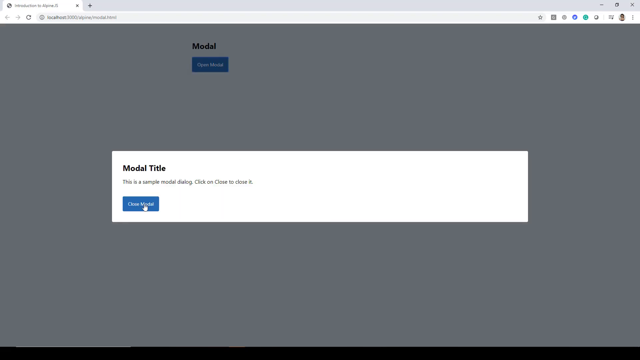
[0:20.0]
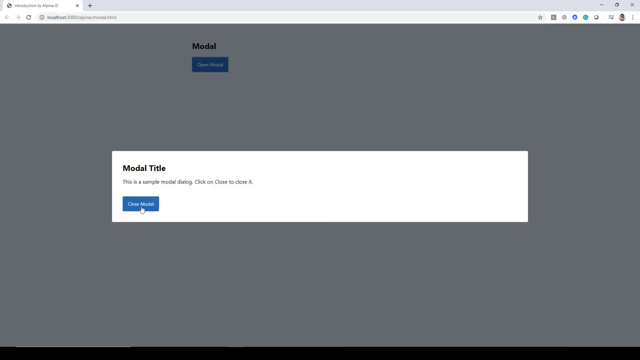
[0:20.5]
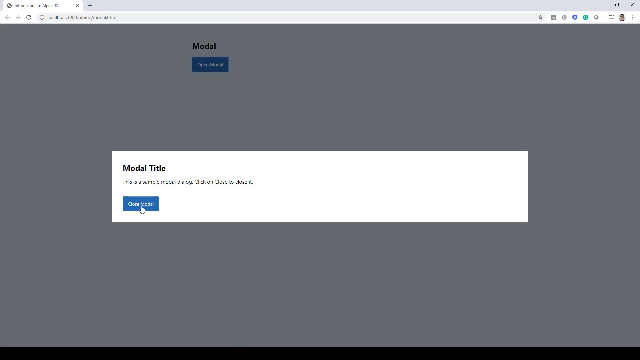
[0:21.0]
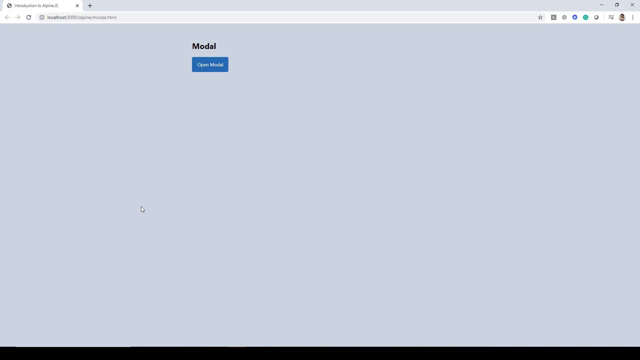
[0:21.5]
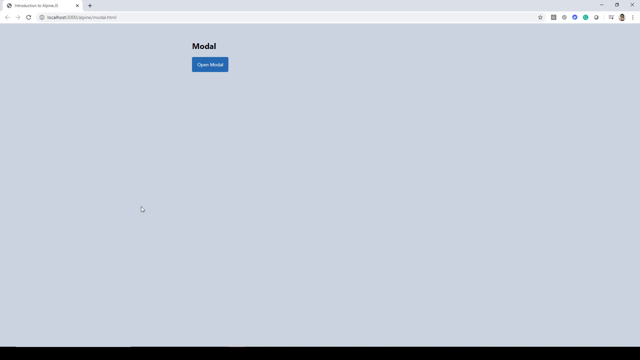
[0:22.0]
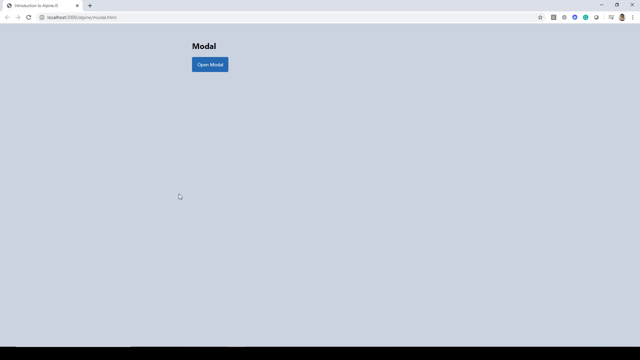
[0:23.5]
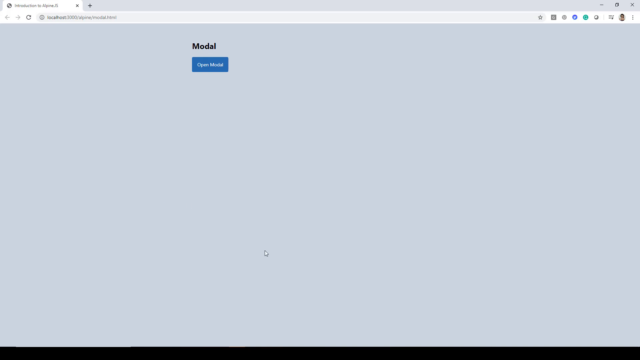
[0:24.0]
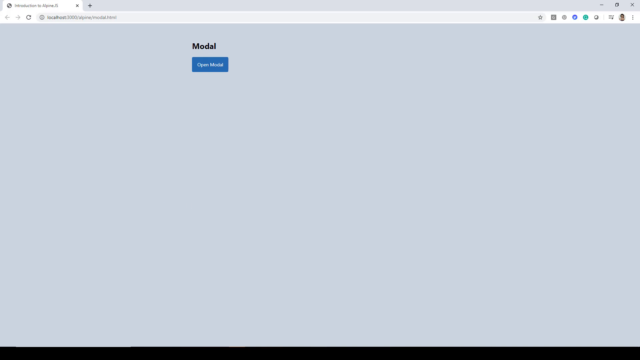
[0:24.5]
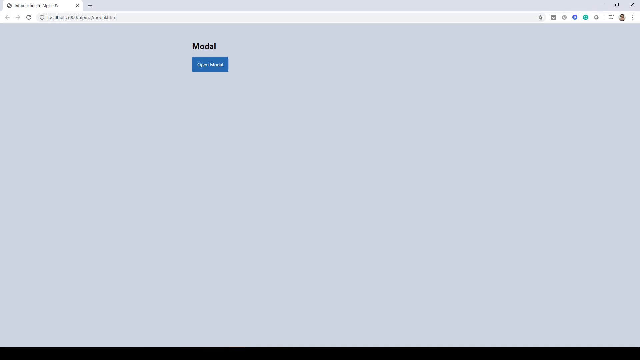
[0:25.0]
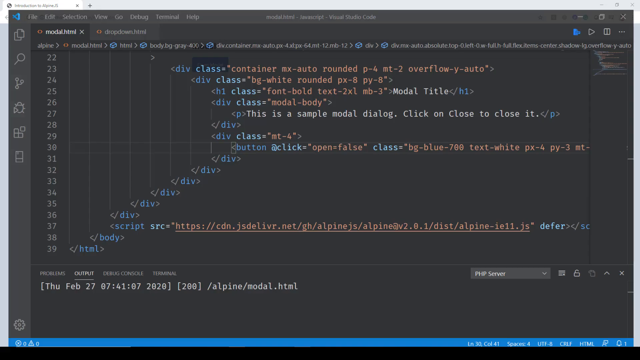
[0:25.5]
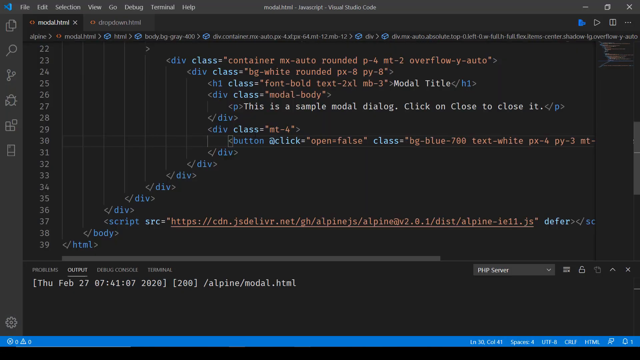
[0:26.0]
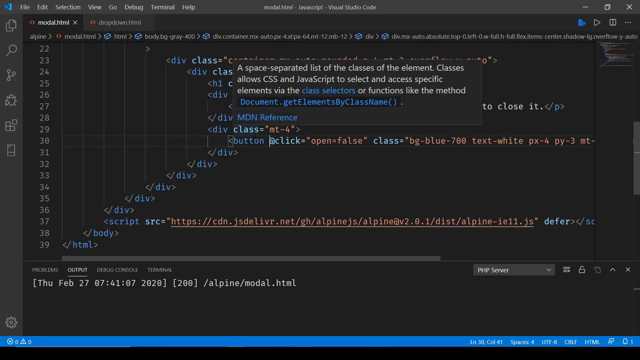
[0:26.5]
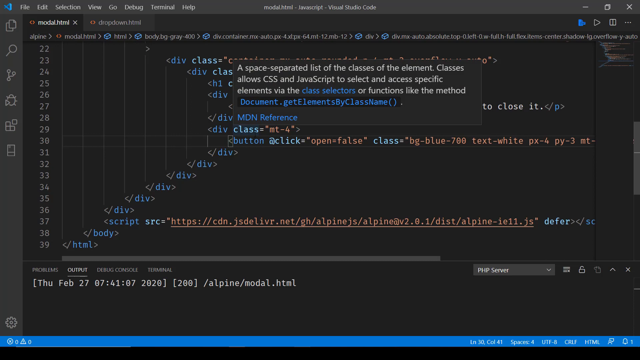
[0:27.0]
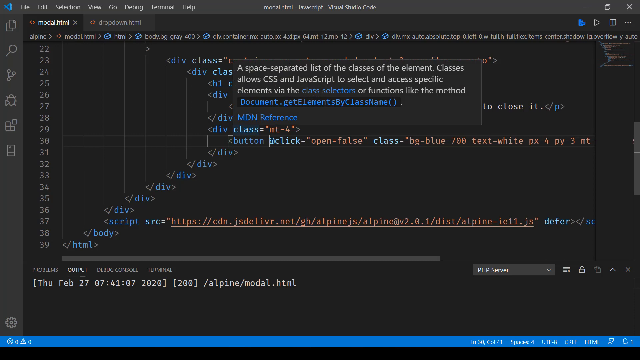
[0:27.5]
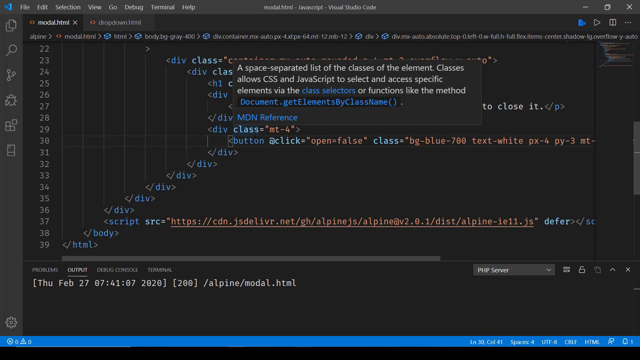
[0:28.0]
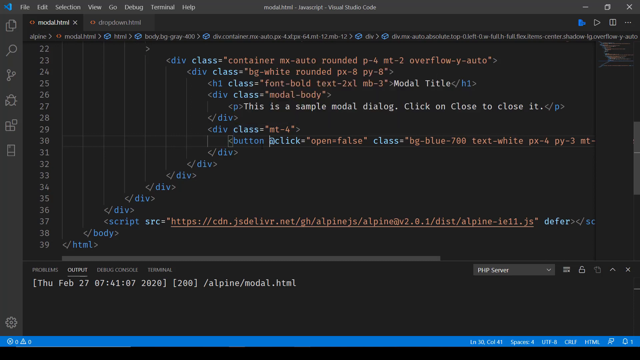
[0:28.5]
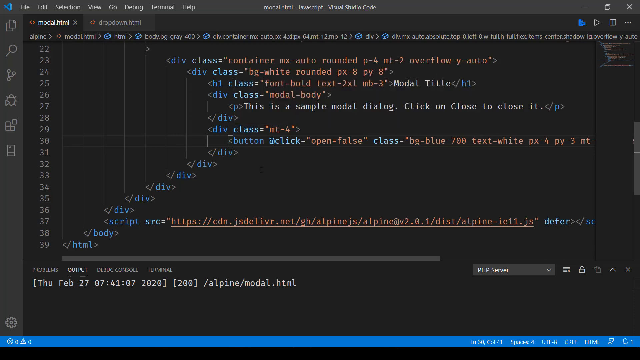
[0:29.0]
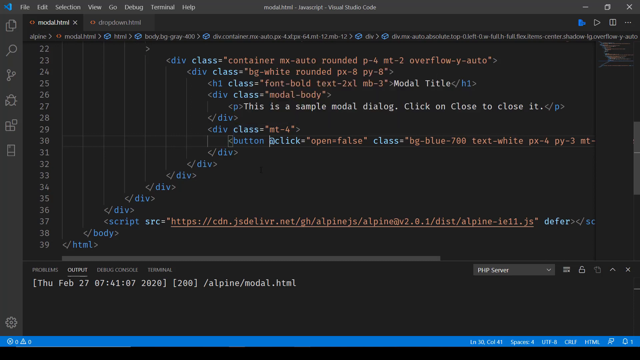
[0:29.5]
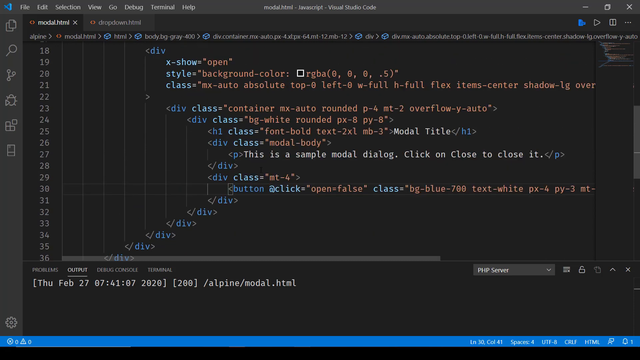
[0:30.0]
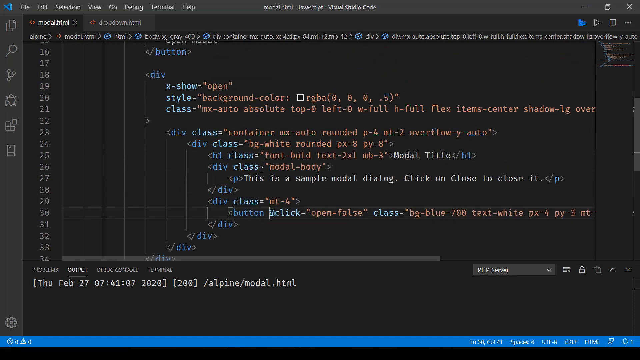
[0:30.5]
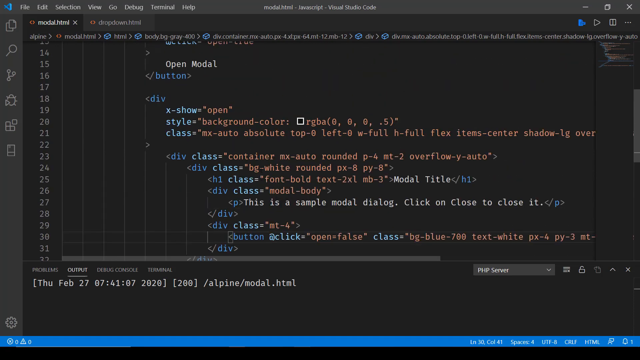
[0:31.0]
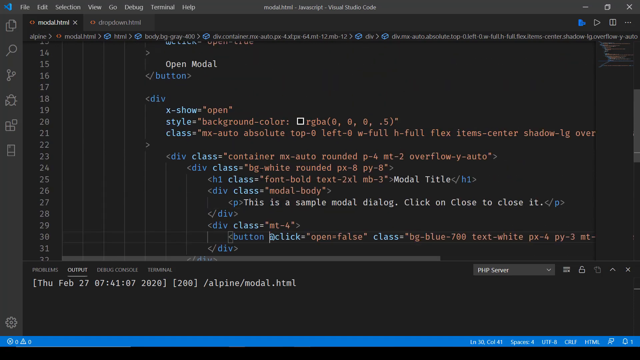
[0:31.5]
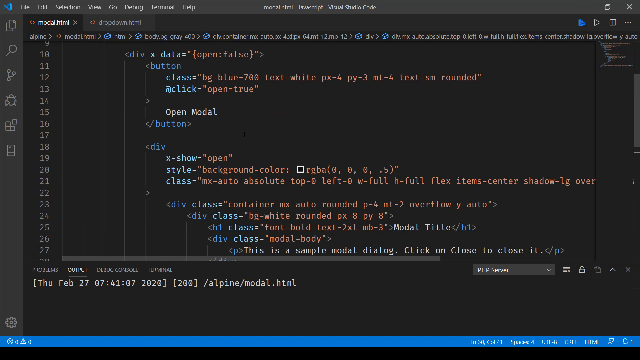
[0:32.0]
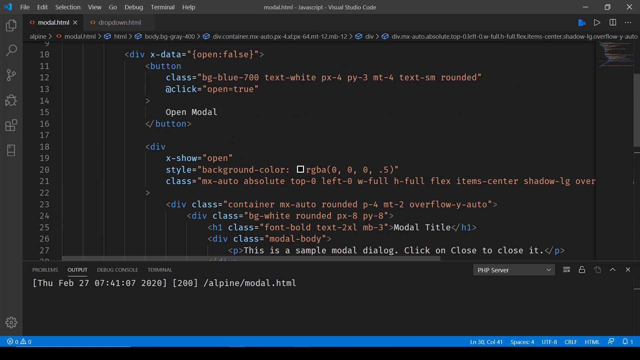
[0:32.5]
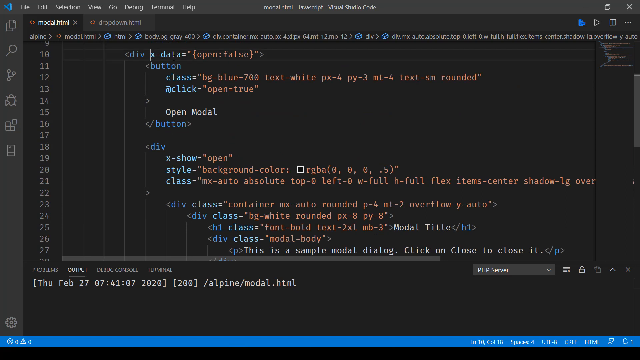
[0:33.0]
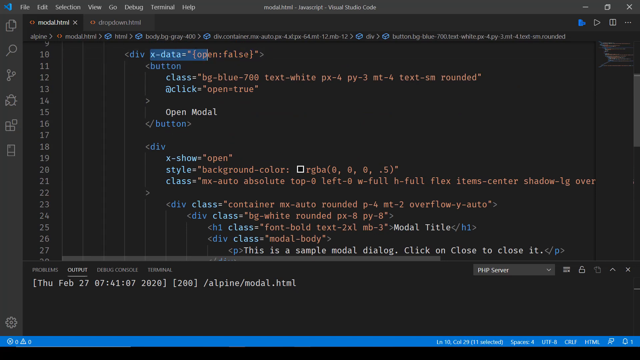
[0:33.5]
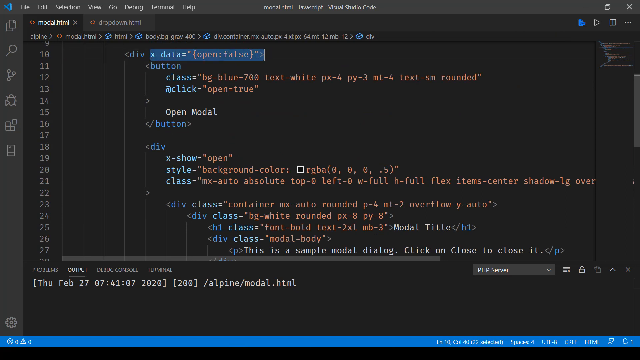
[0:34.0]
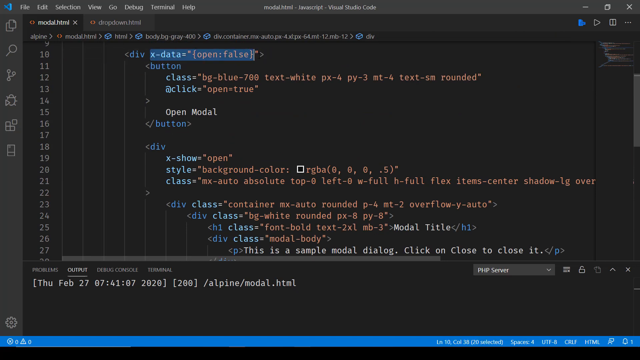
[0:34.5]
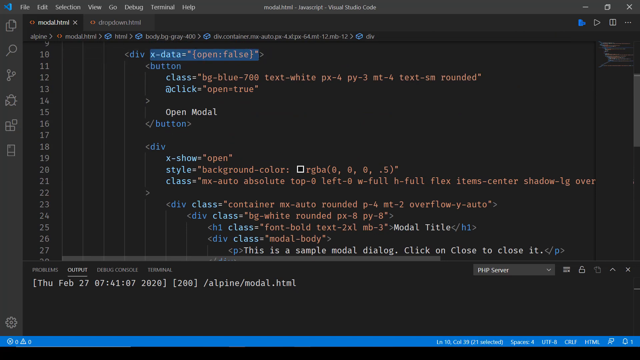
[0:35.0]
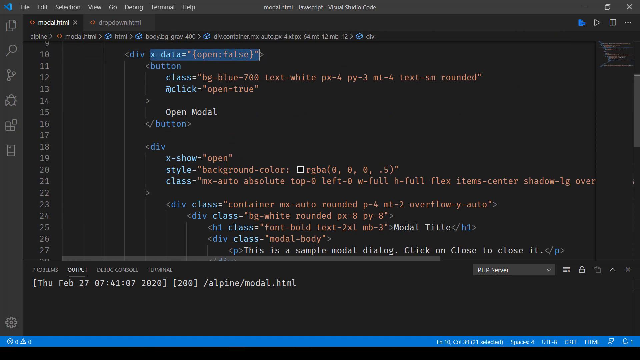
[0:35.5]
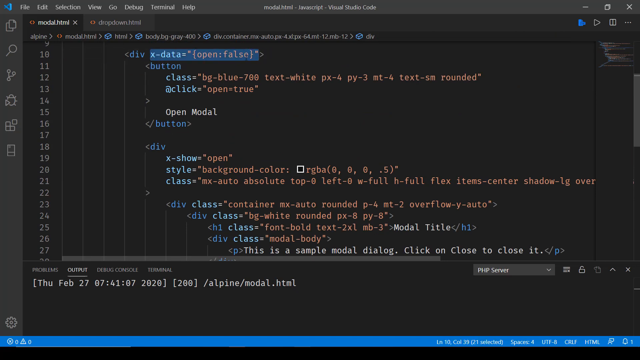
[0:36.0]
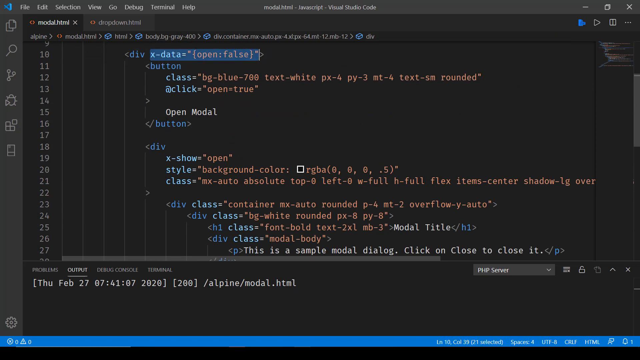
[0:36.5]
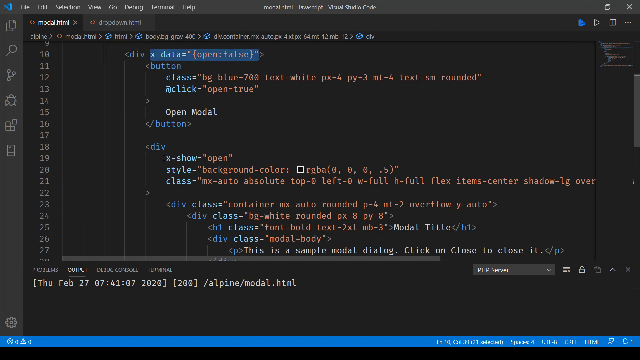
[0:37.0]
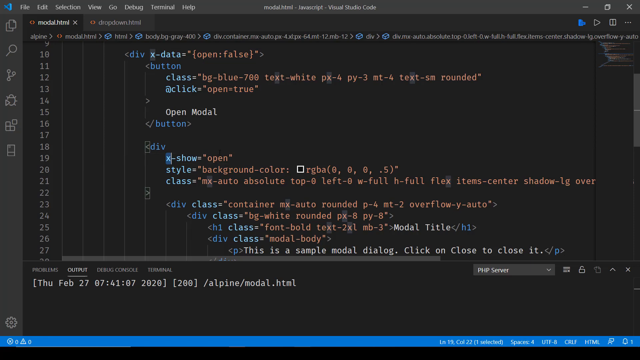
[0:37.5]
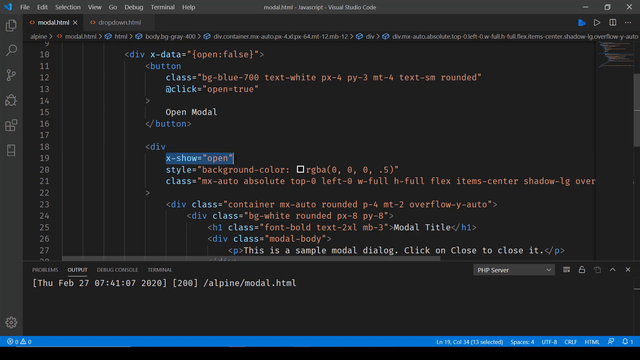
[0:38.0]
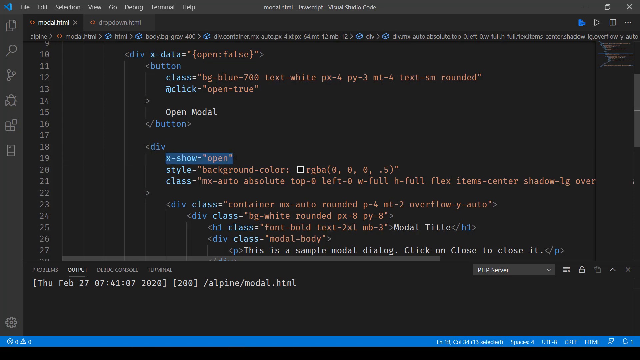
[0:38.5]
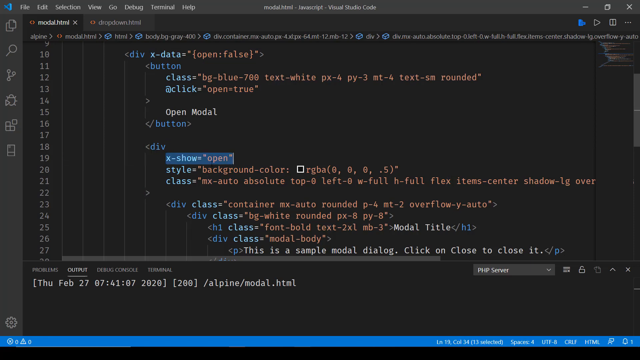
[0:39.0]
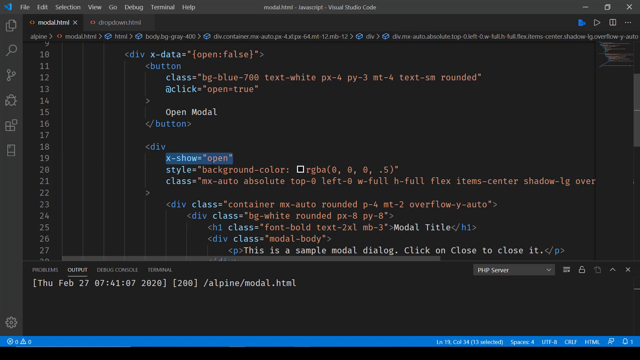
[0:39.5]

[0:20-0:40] The button does not visibly do much. Visual Studio then opens with a file named modal.html, which seems to contain the HTML code for the very barebones site. The browser is still Chrome with the same extensions, and the address still shows localhost with no URL. Where the title was, there is just "modal title." Additional code toward the bottom is briefly visible.